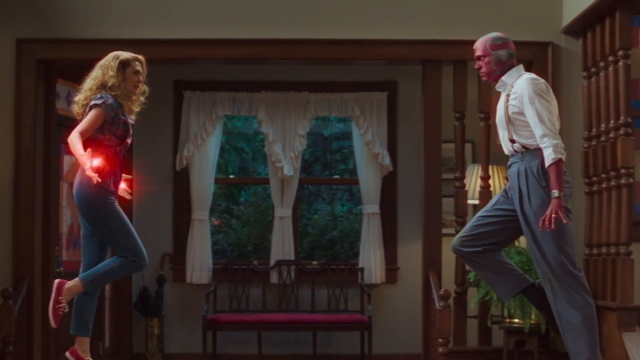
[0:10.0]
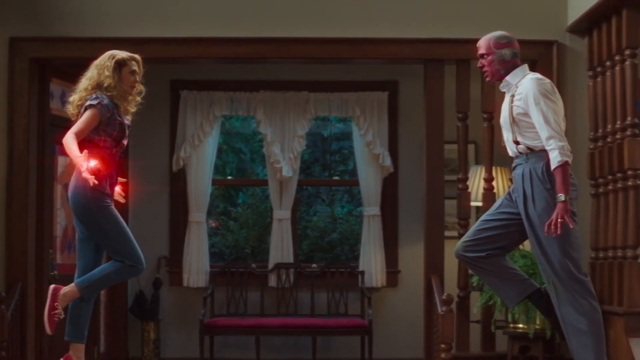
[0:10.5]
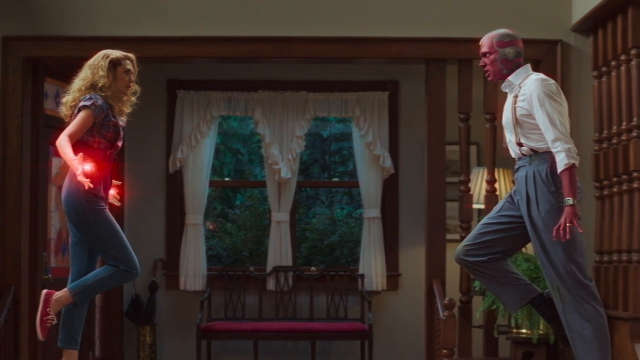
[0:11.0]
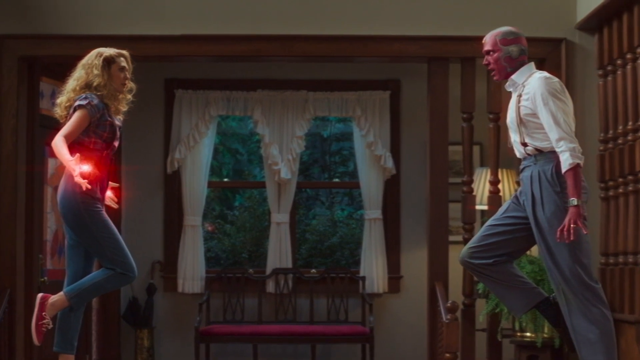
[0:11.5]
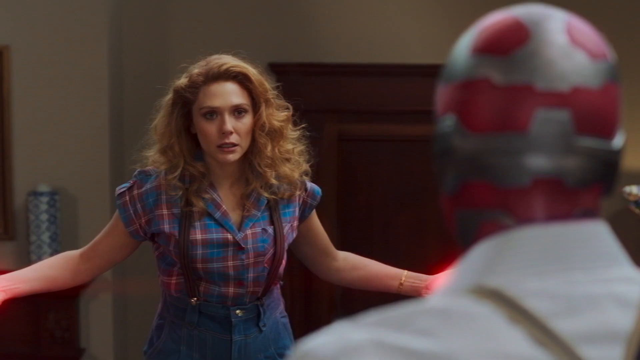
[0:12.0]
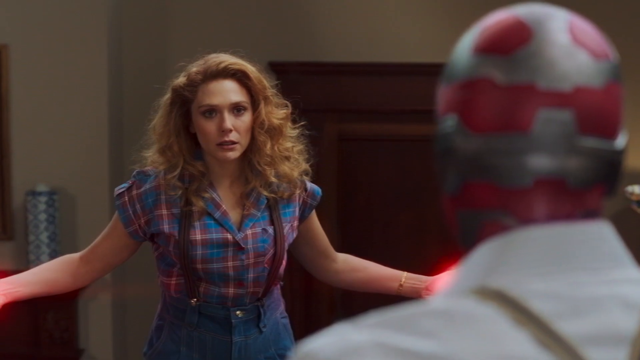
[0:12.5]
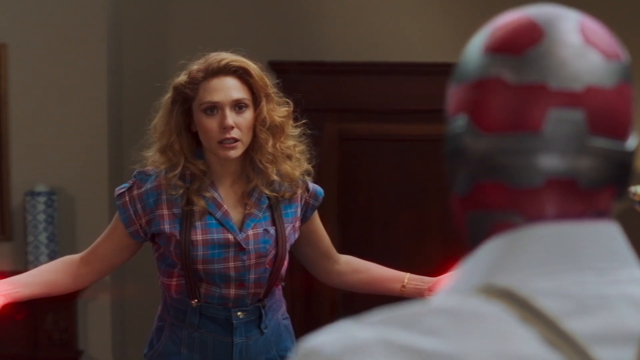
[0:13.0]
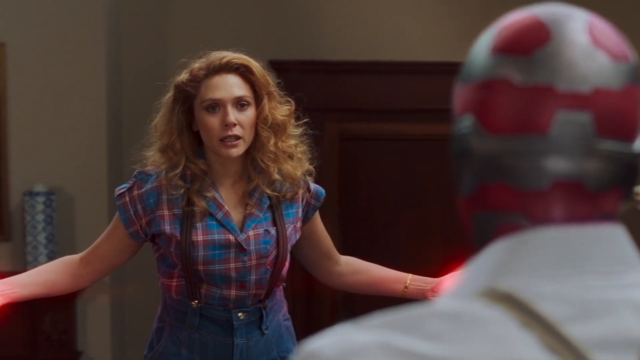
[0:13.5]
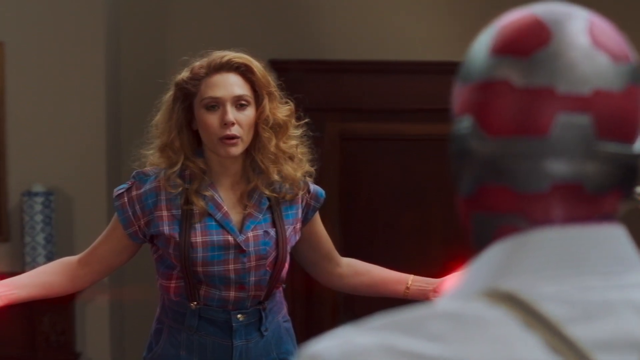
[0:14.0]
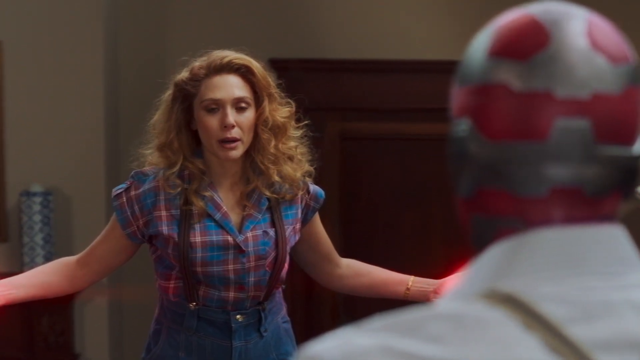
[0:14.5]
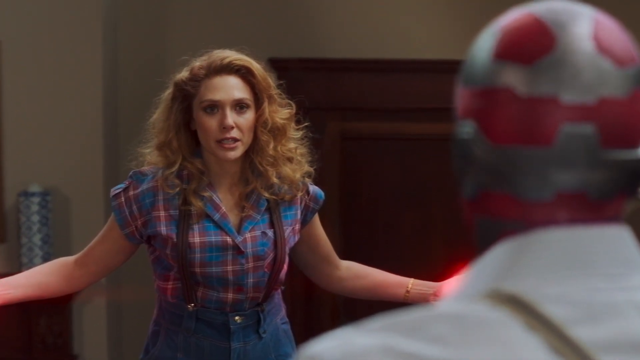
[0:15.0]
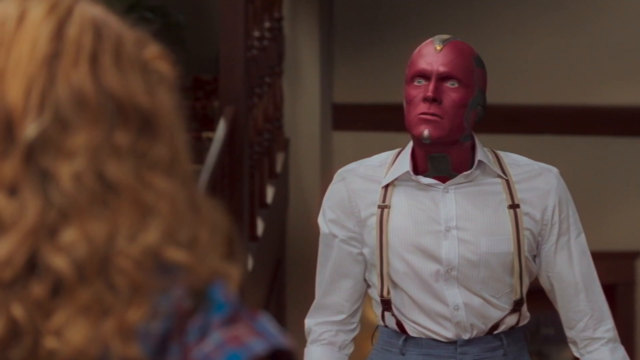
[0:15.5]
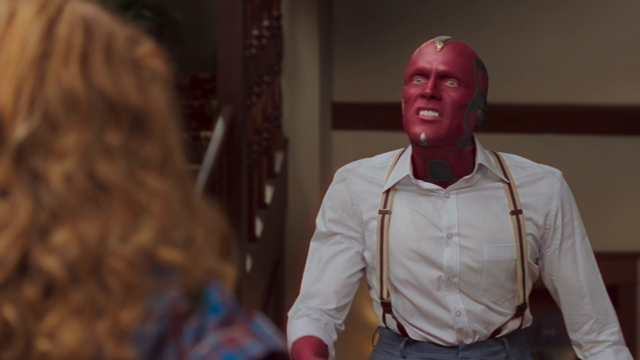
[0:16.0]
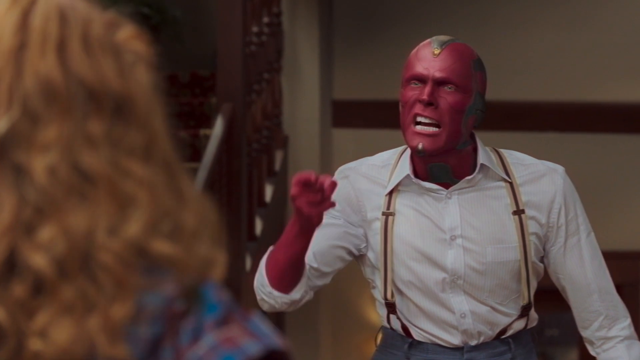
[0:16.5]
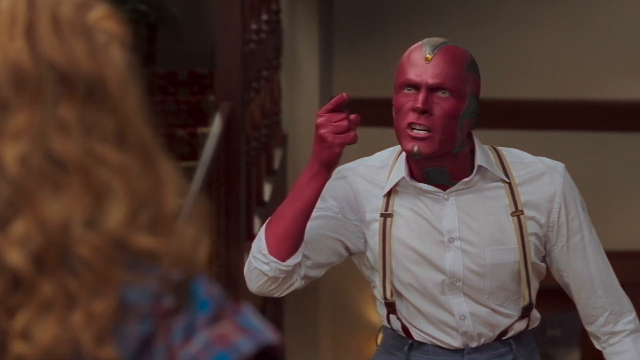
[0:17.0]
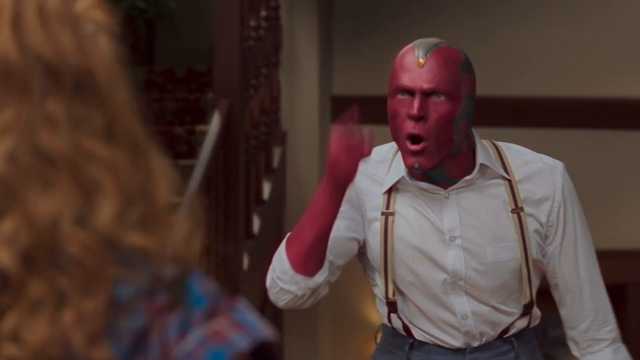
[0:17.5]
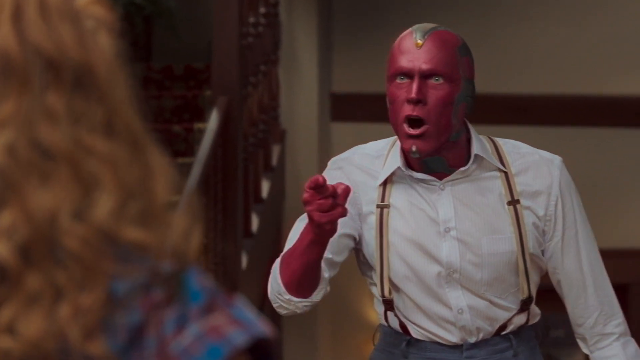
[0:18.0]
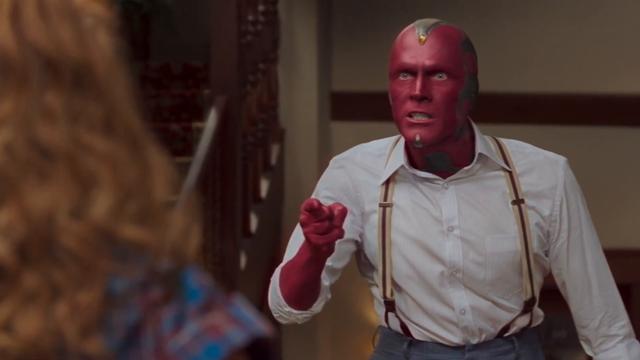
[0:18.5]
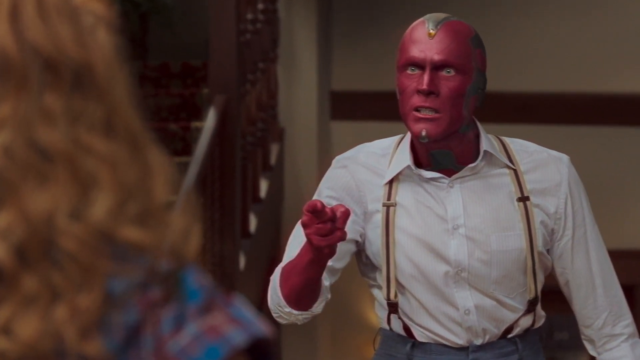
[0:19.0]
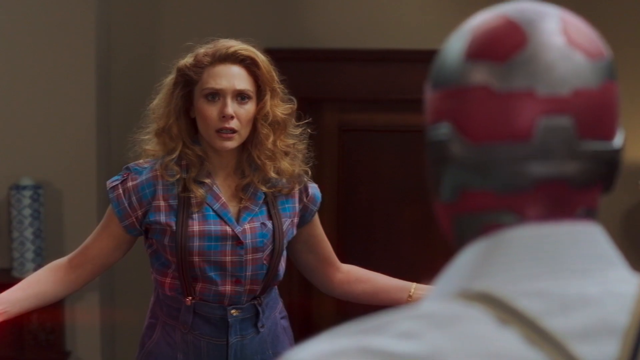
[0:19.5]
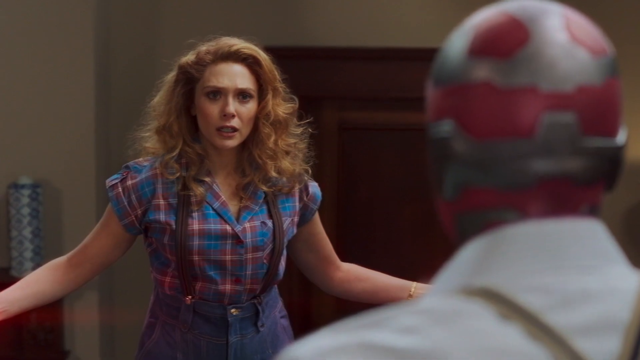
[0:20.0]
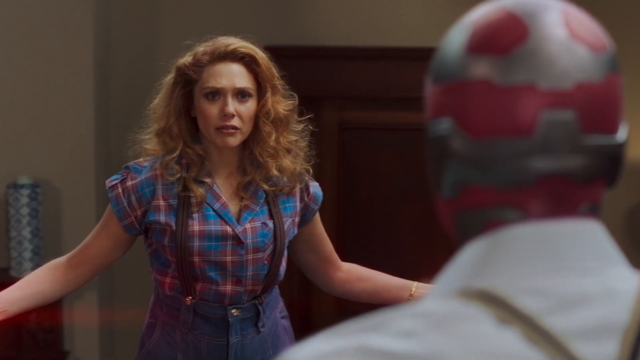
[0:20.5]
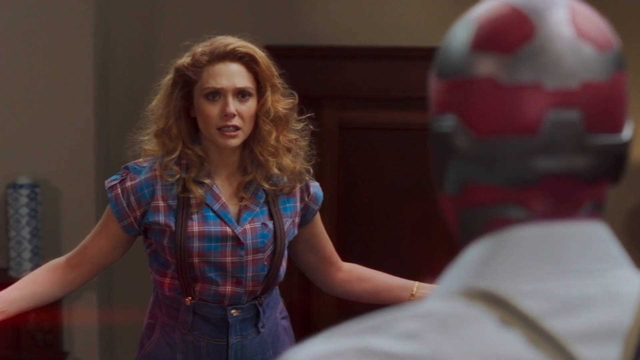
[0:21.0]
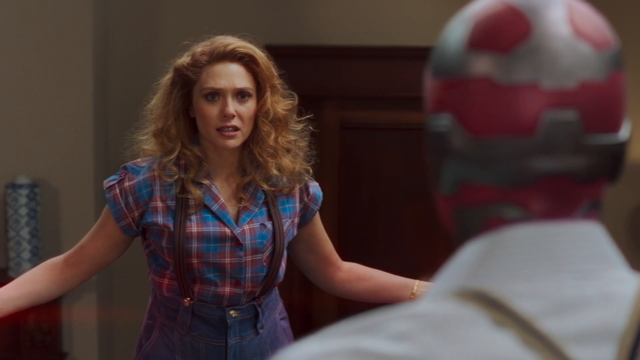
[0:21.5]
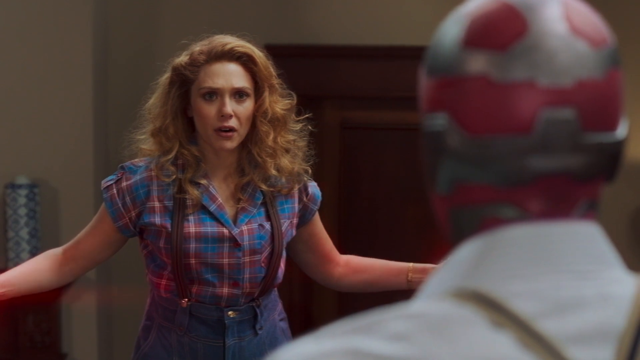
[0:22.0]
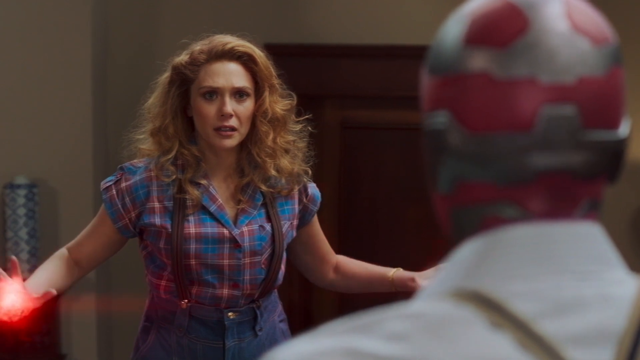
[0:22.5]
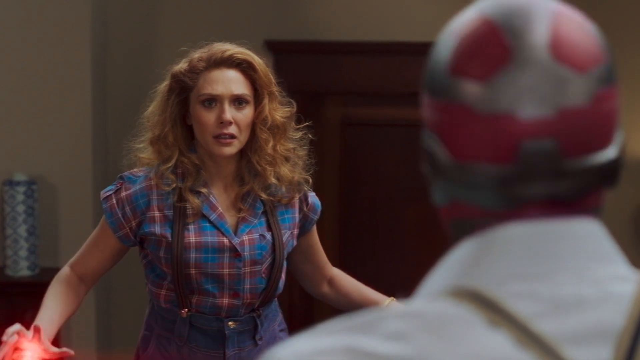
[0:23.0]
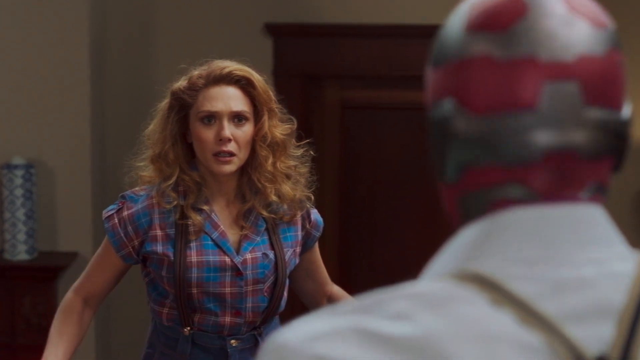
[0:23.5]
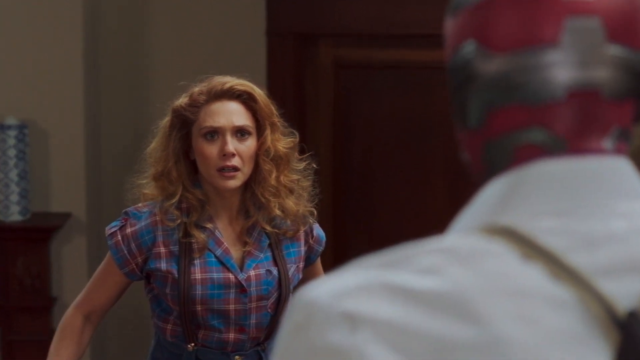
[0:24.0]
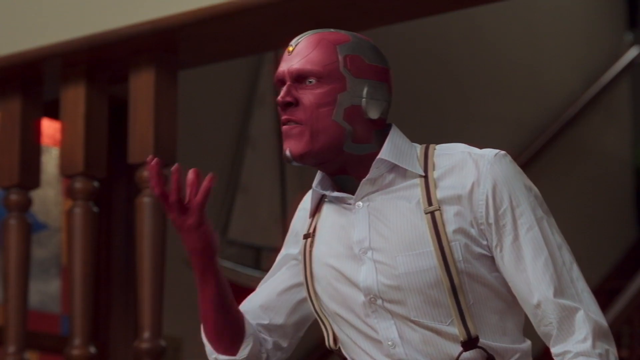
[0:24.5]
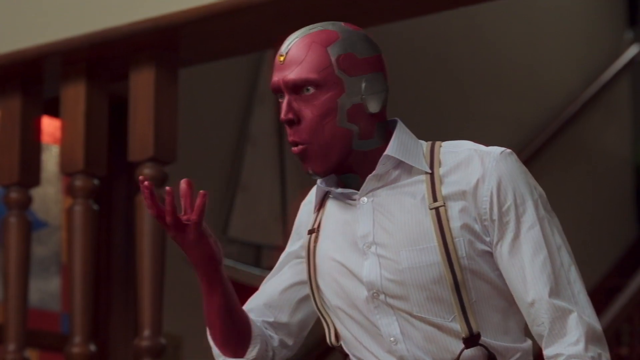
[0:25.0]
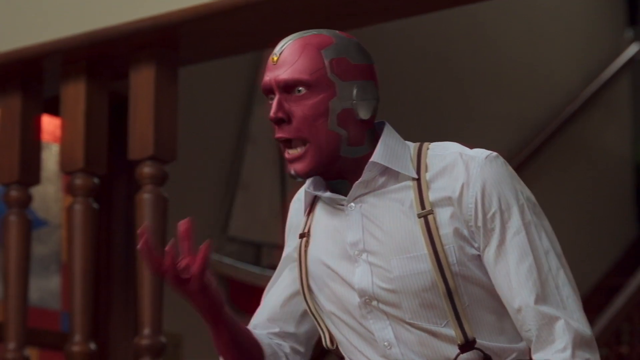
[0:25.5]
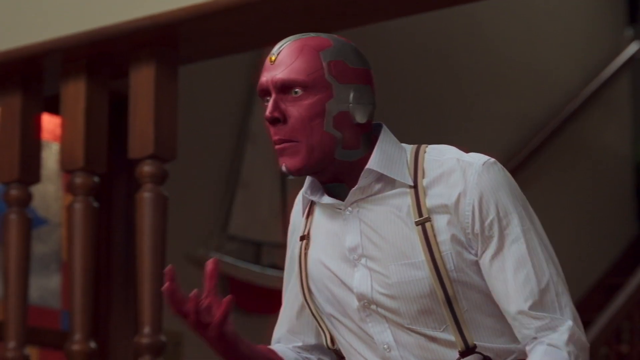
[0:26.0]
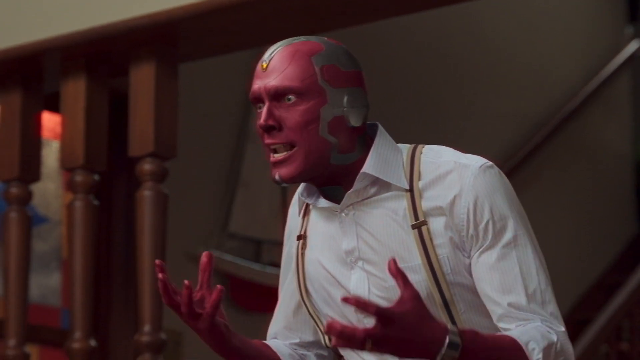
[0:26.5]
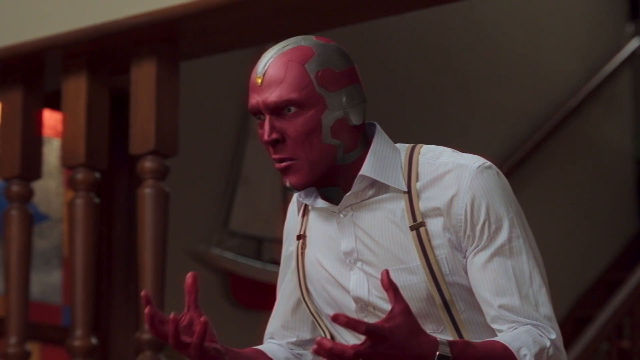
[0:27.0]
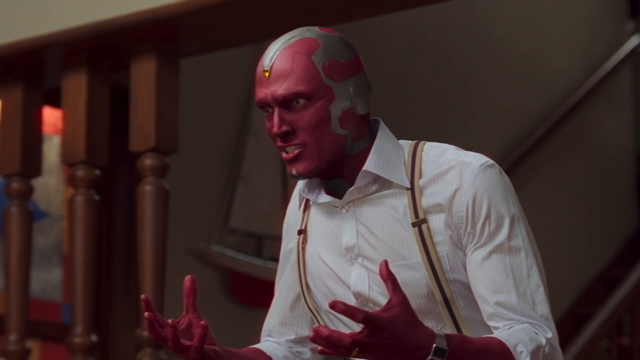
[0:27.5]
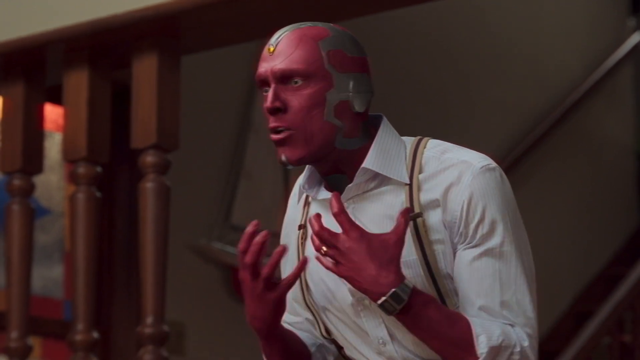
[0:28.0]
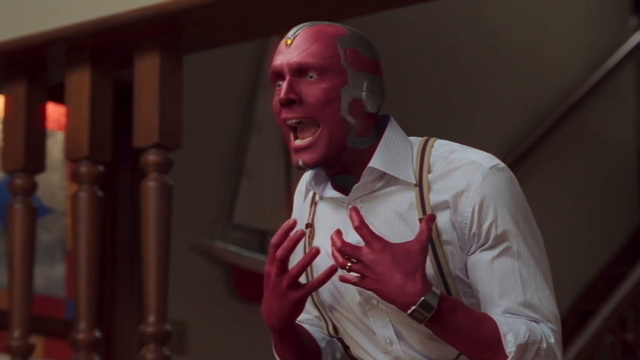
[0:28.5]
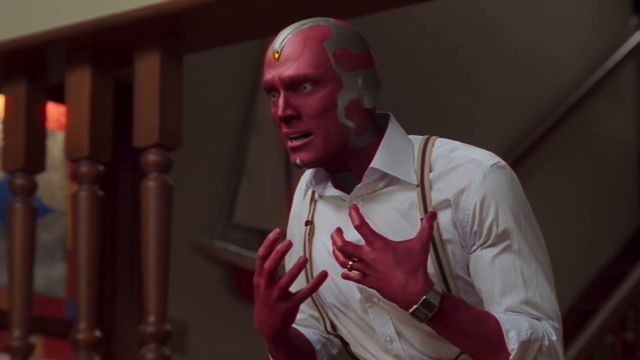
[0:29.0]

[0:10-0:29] The red-complexioned man, apparently a supernatural being, wears gray trousers, a white shirt and black shoes, while the blonde-haired woman looks normal. As they continue talking, both become angry. He wears something like a bracelet. The red man shouts something and appears to accuse the woman of something, very angry, while she seems to try to justify herself and points. He wags his left hand and raises it, and they seem about to fight. Chairs are in the background by the window.